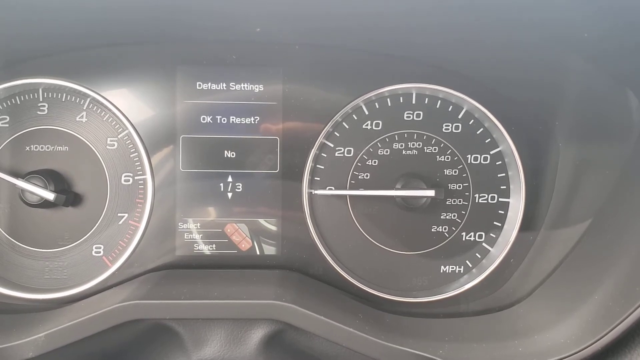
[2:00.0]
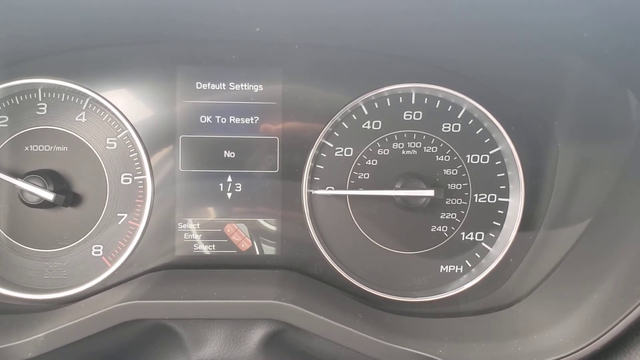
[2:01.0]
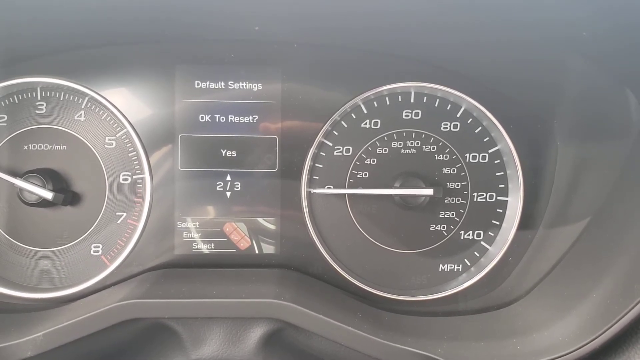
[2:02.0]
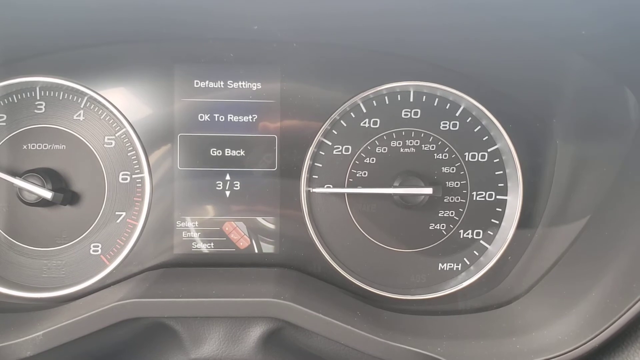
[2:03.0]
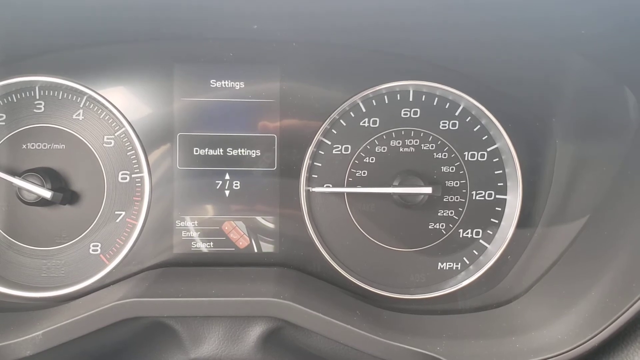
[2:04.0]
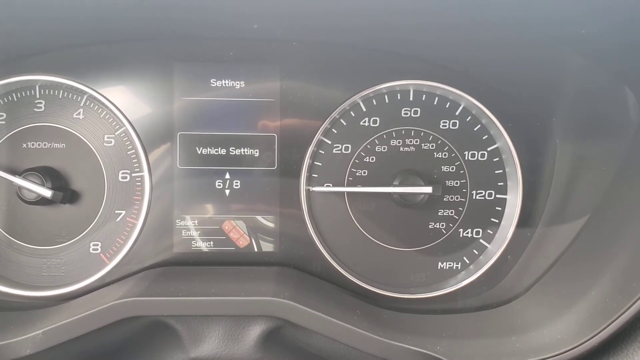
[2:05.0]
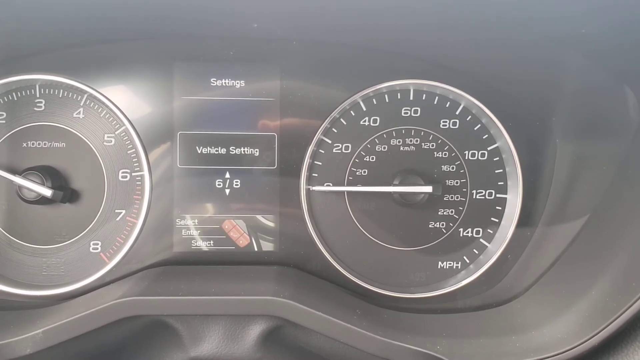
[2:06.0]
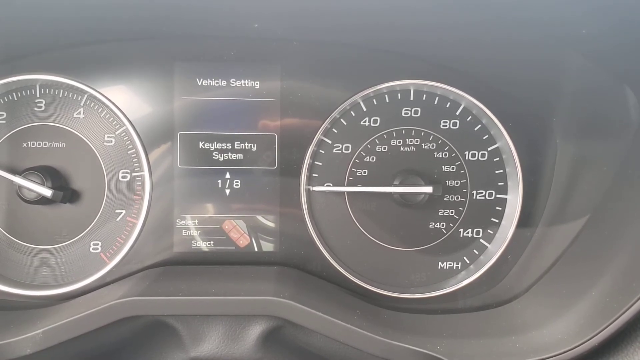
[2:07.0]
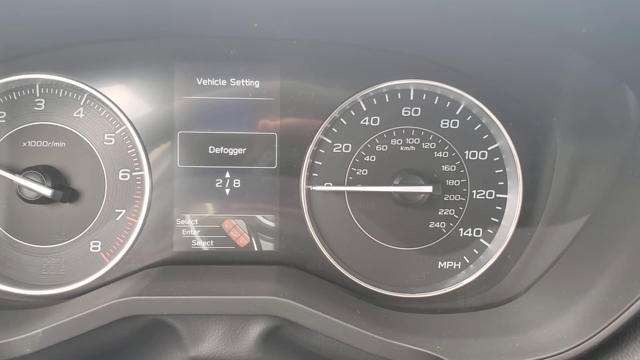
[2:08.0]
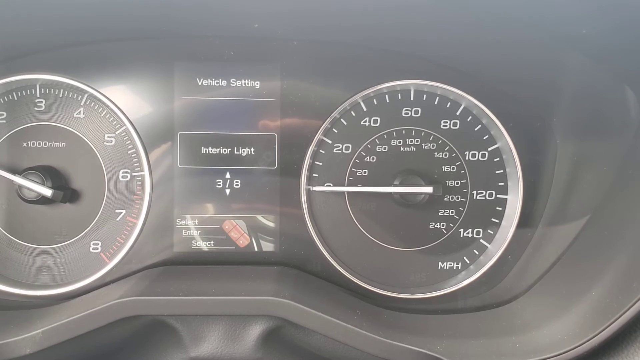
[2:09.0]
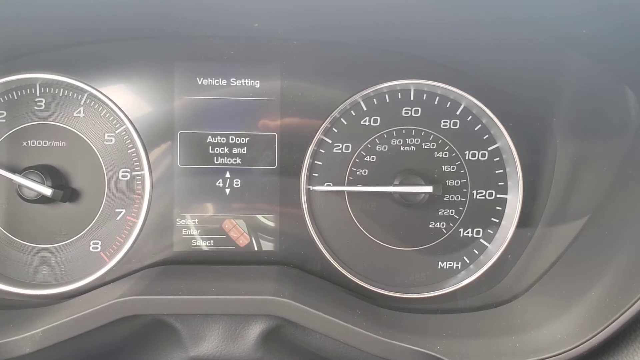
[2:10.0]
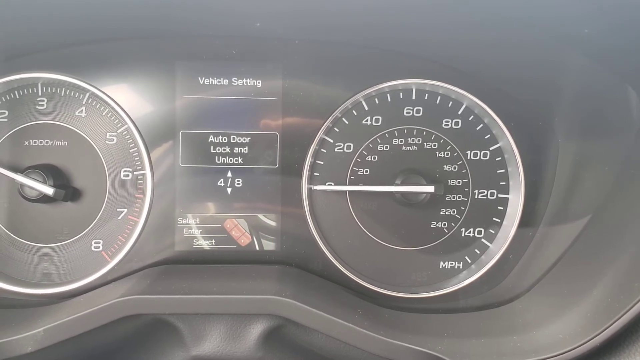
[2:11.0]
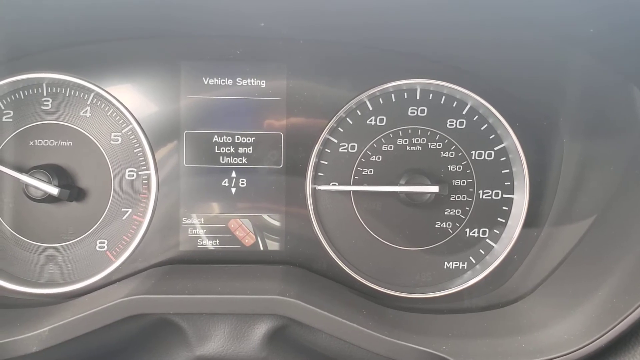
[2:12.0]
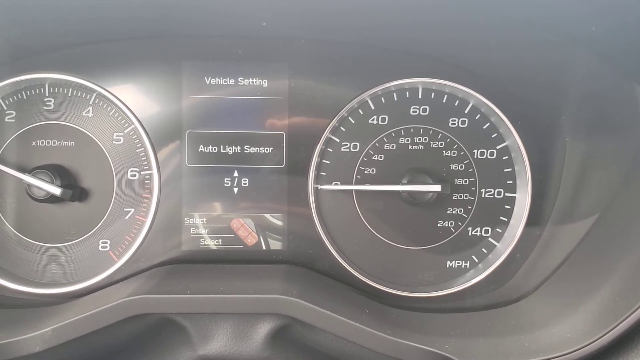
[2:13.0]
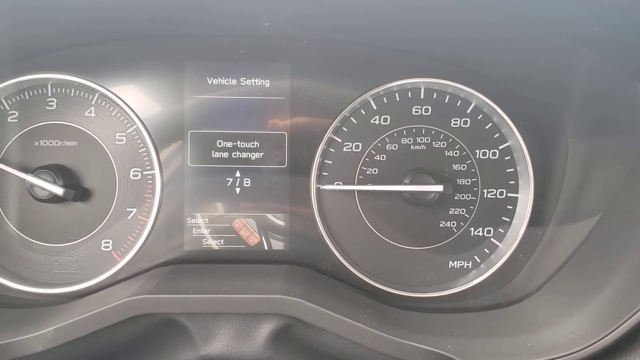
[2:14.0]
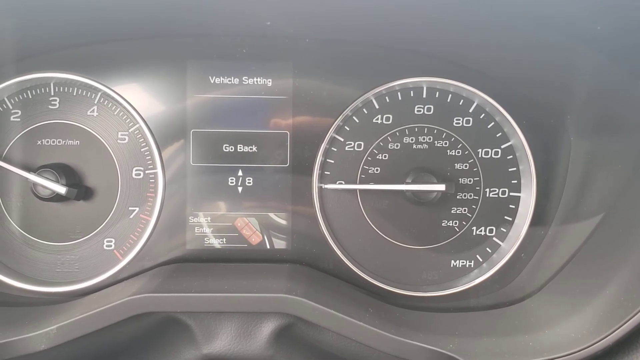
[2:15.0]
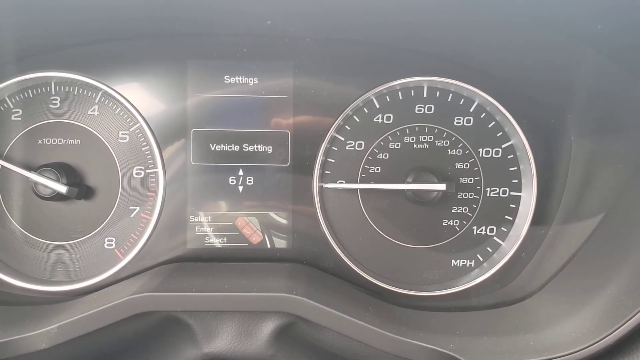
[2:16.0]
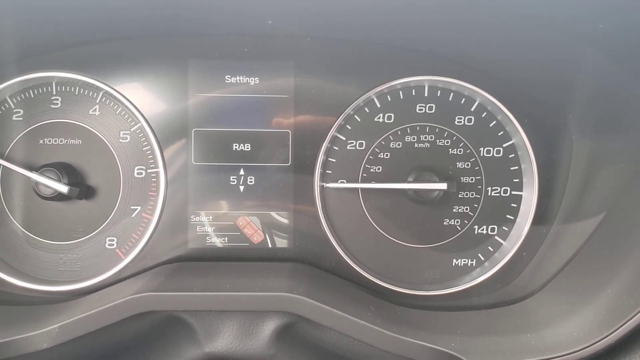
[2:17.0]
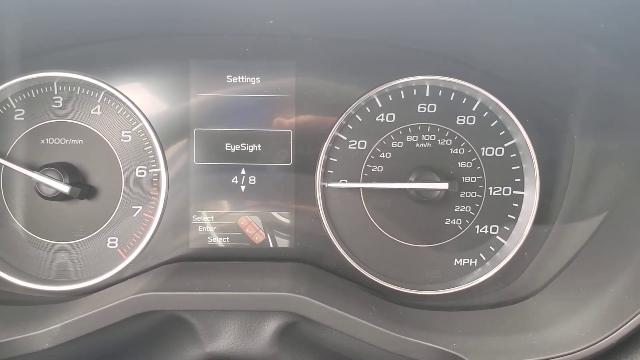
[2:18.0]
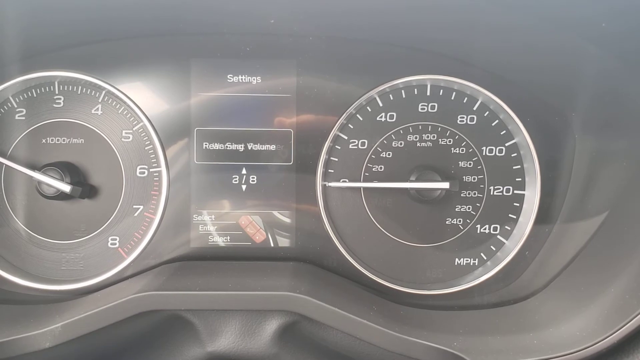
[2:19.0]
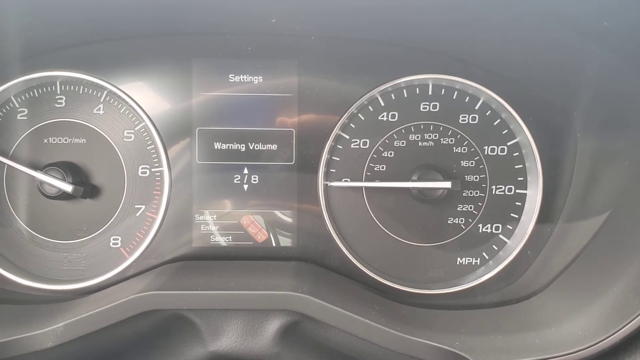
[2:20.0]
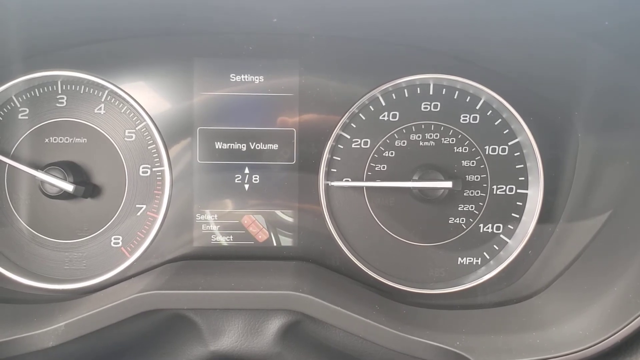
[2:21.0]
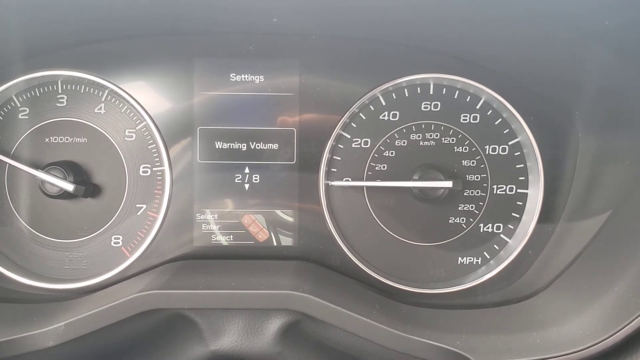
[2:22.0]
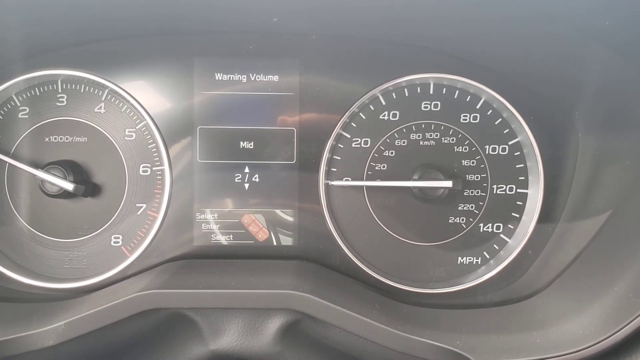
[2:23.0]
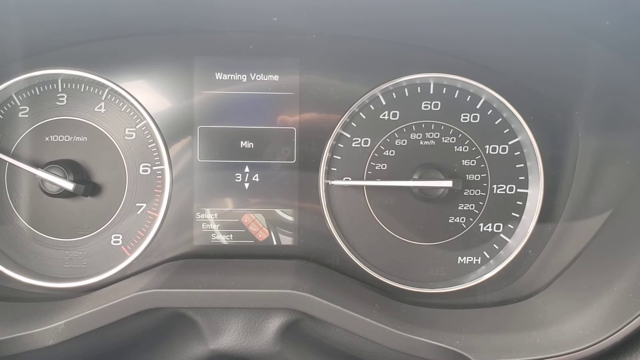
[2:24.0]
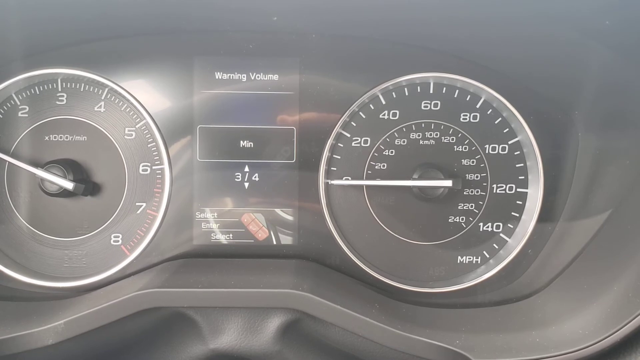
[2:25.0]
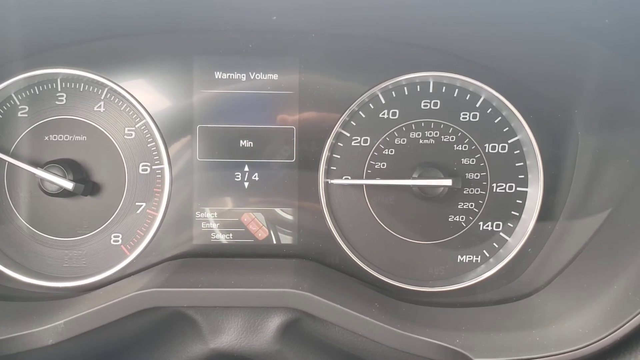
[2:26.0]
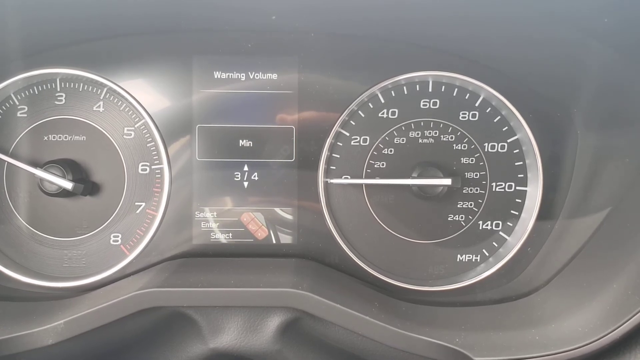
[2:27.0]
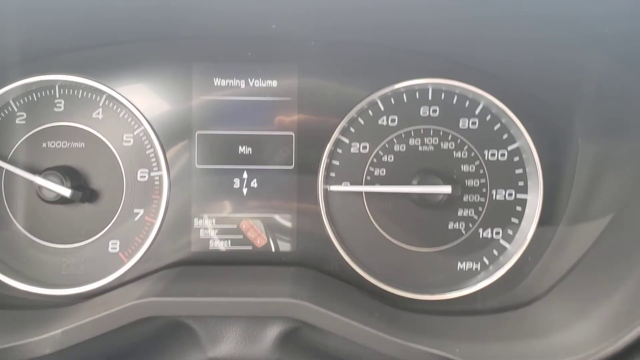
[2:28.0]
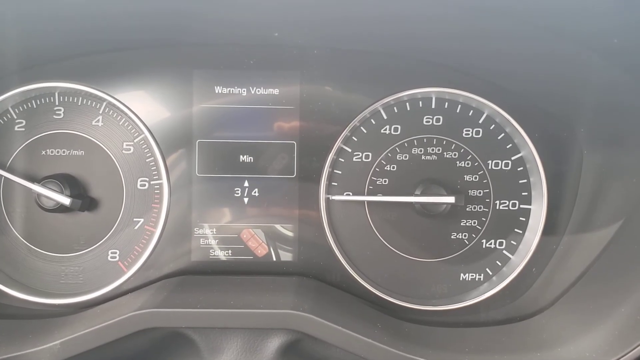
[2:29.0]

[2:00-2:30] The digital screen says "default settings" and "okay to reset", with "no" underneath, an arrow pointing up and down, and "1/3". Then the selection switches to "yes", and it says "go back". The screen then shows "vehicle settings", "key list", "door entry", "auto door", "lock and unlock", "welcome", "lighten", "go back", "vehicle settings", "RAB", "eyesight", "rear seat", "warning volume", and maybe "mid" or "min". The person apparently is showing all the things that can be done with the buttons on the lower left-hand side of the steering wheel; it seems like an instructional video.